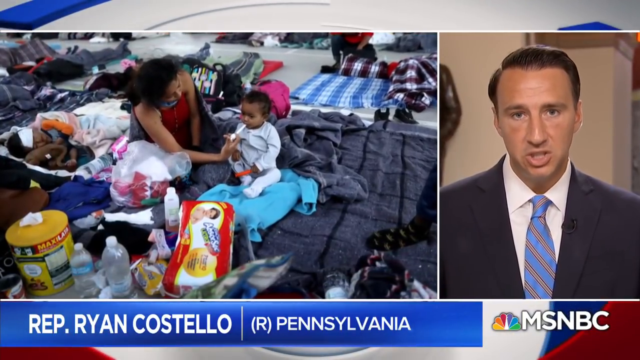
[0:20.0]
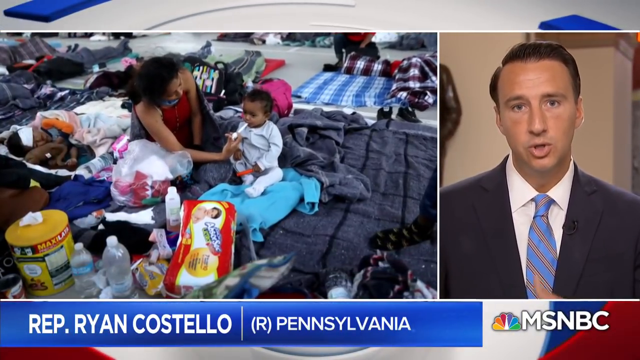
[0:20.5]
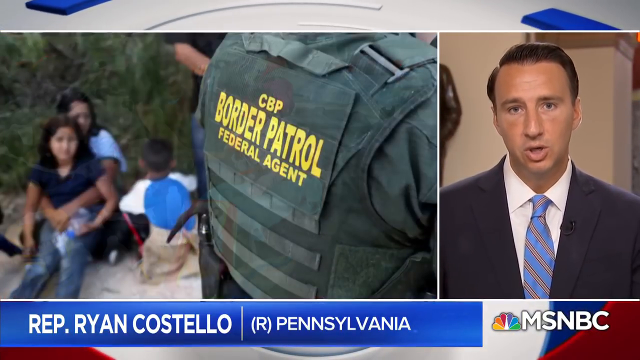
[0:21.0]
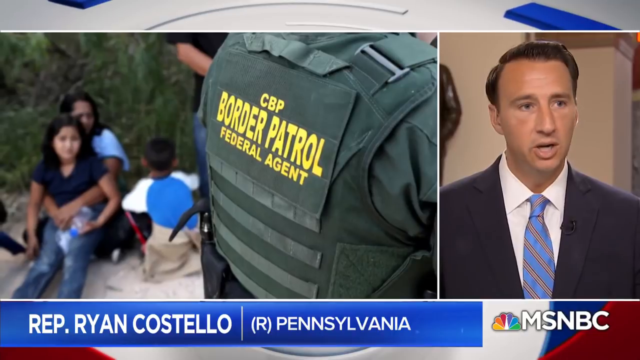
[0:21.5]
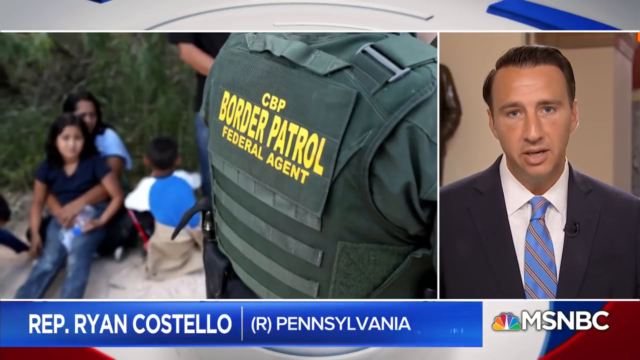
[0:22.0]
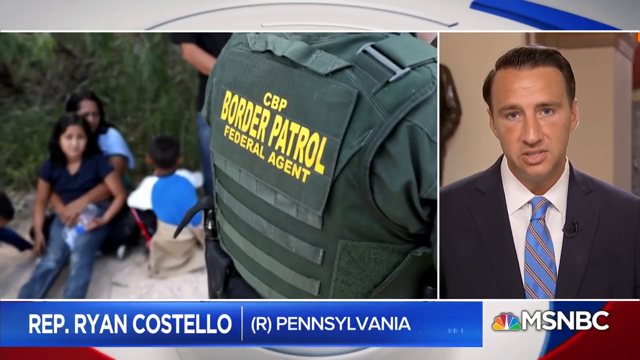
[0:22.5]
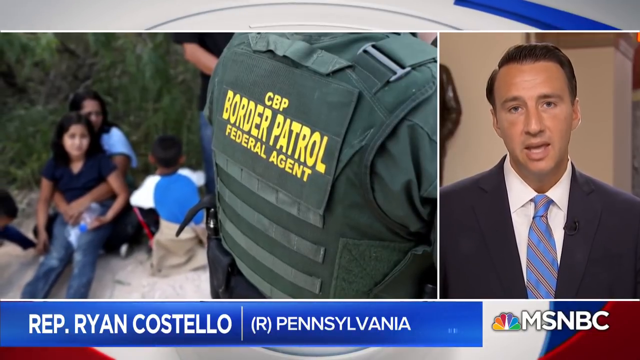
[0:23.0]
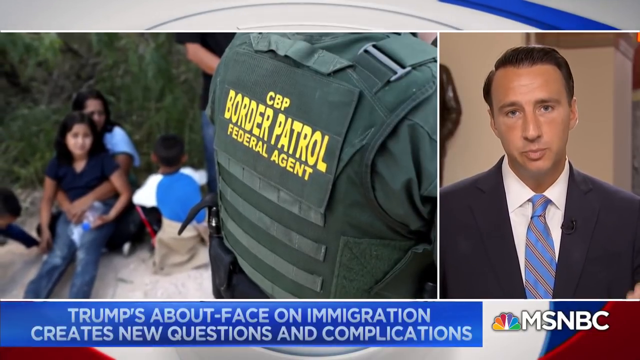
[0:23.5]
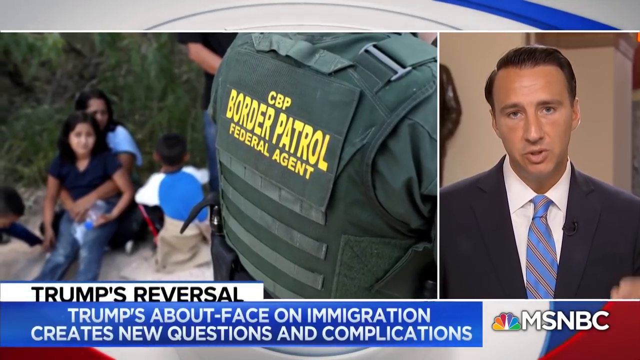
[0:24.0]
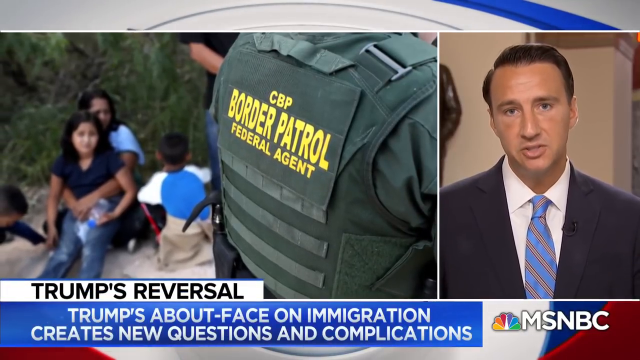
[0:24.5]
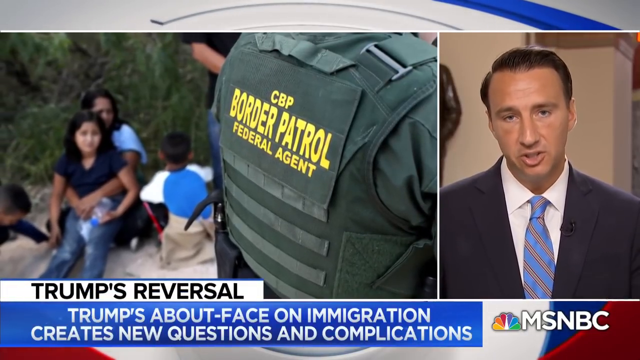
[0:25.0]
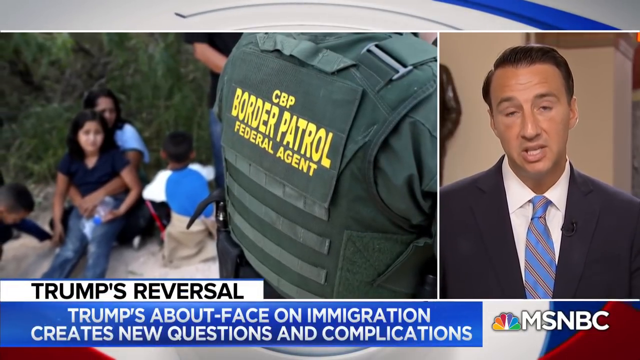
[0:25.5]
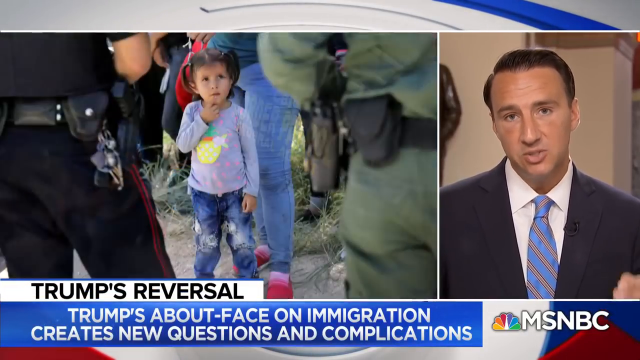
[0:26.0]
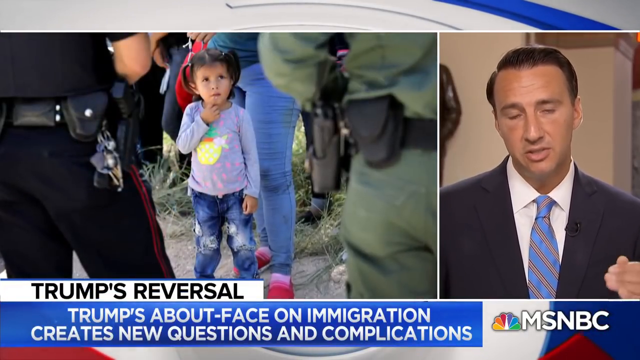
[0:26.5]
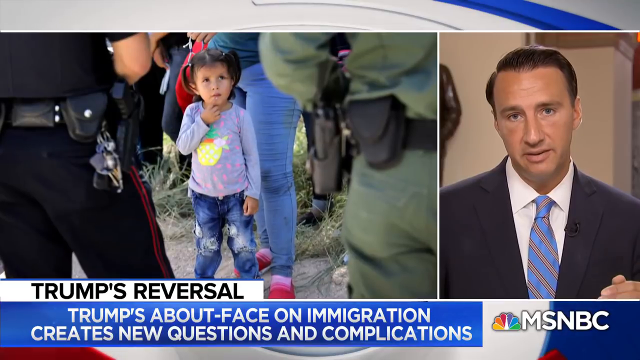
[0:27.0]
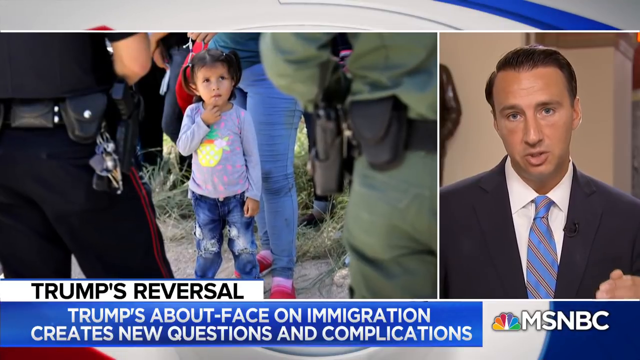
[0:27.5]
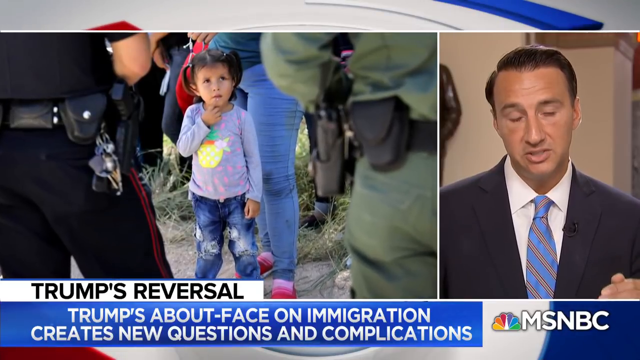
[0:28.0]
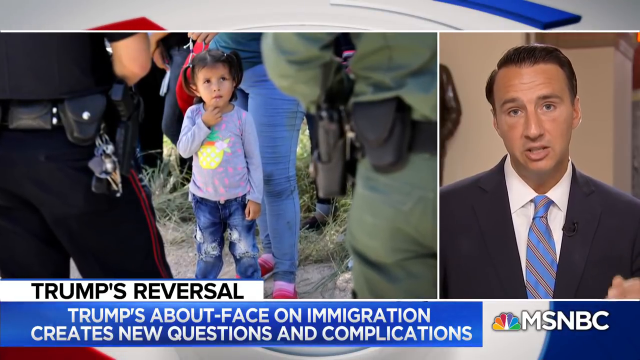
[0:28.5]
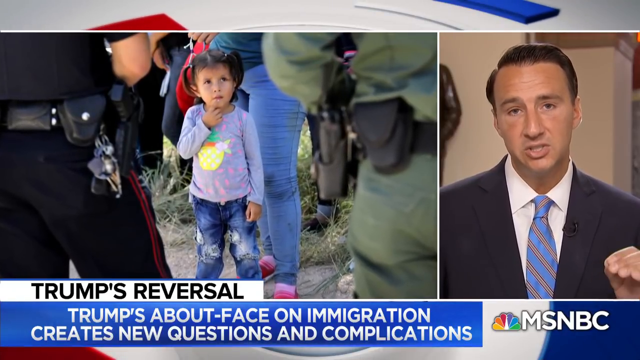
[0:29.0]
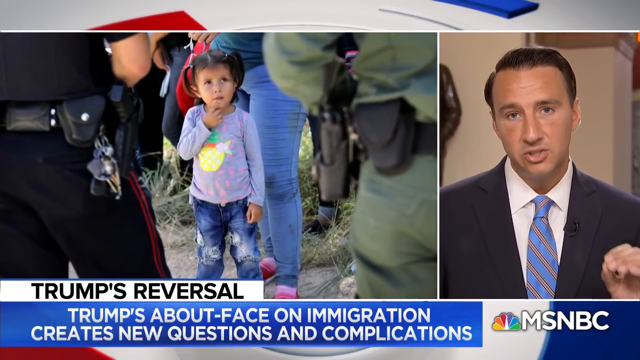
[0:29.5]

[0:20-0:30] Representative Ryan Costello, Republican from Pennsylvania, is on the right third of the screen. On the left is what appears to be a young mother feeding her child, with what looks like a bag of their clothes and belongings. Another child lies asleep behind her with something on their forehead, possibly a cloth. A second image appears on the left, showing the back of a person in a green uniform wearing a vest, apparently bulletproof, that says "CBP Border Patrol Federal Agent". On the far left, what looks like a mother sits cross-legged on the ground with her arms around a young child, maybe 10 or 11 years old and apparently her daughter, who sits in her lap with her legs extended; she wears what looks like a blue shirt and jeans. The image is a little blurry, but the girl has a sad expression. It almost looks like they are sitting in sand, with some brush behind them. Next to them is what looks like the back of a little boy with short dark hair, wearing a shirt with white sleeves and a medium blue body. They appear to be Latino. Next to them stands a person, apparently a man, in a dark black shirt and mid-tone denim jeans; only an arm and part of the body are visible, not the face. The blue news crawl at the bottom reads "Trump's about-face on immigration creates new questions and complications". Another image on the left shows a little girl in the center, who appears to be Latino, with two little pigtails, wearing what looks like a blue-gray polka-dot shirt with an animated or cartoony figure in the middle and denim jeans that look stylized with holes. Her right hand is pointing at or scratching her chin. Behind her is what looks like an adult female in fitted straight-leg jeans and gradient pink slippers or slides, and there looks to be a line or group of other people around her, though only their legs are visible. To the left of the girl is a person in a black uniform with a couple of red stripes down the pant leg, with what appears to be a ring of keys, a holstered weapon, possibly a taser, and perhaps pepper spray on their belt. To her right is a person in green fatigues with similar weapons hanging from their belt. The setting appears similar, with what looks like sand and brush. The little girl looks up into the faces of the officers surrounding them. Throughout, the representative on the right stares directly into the camera and gestures with his left hand, moving it up and down.